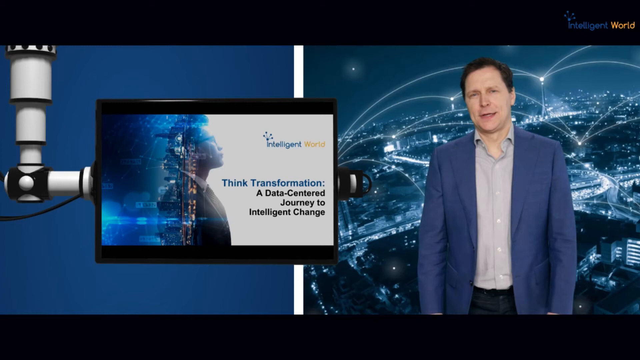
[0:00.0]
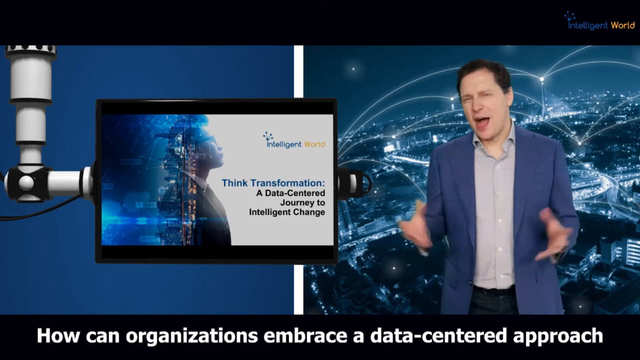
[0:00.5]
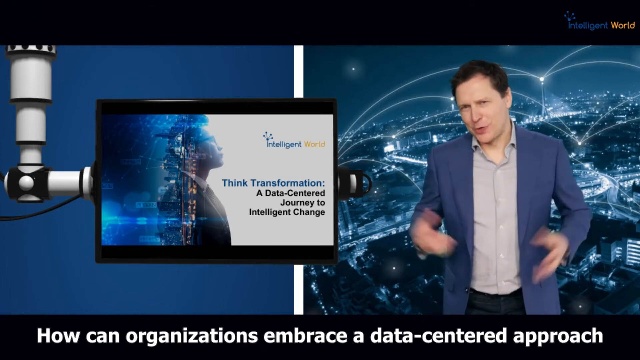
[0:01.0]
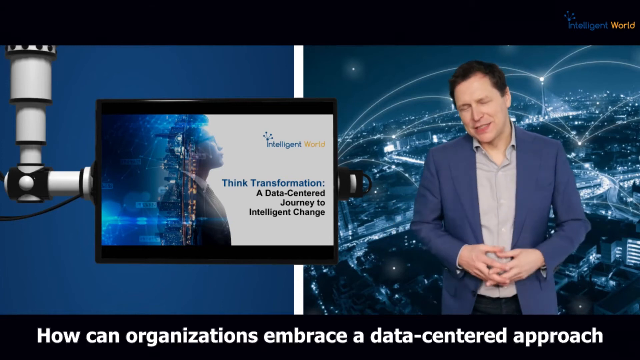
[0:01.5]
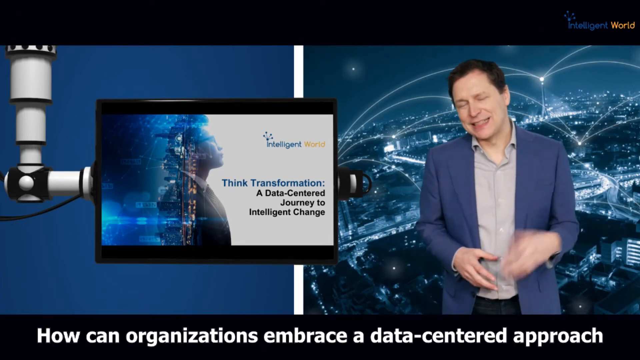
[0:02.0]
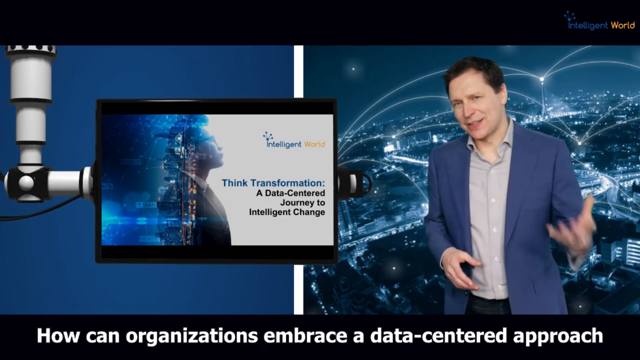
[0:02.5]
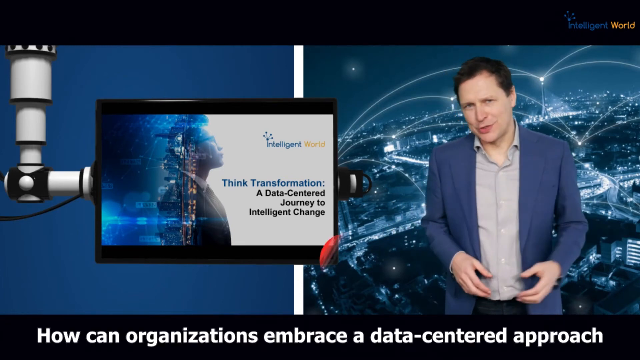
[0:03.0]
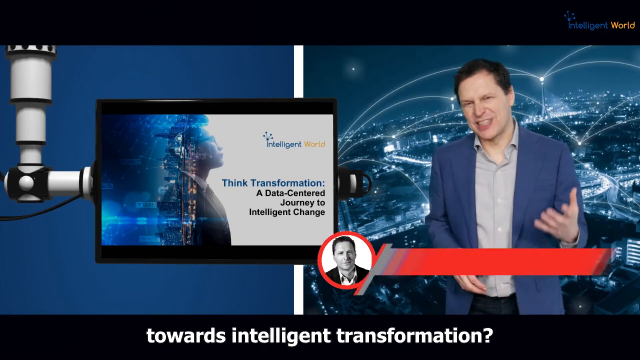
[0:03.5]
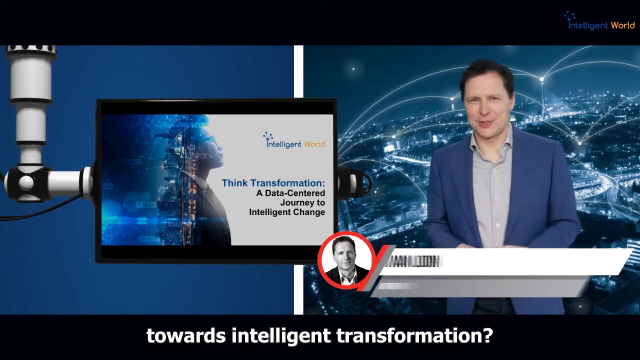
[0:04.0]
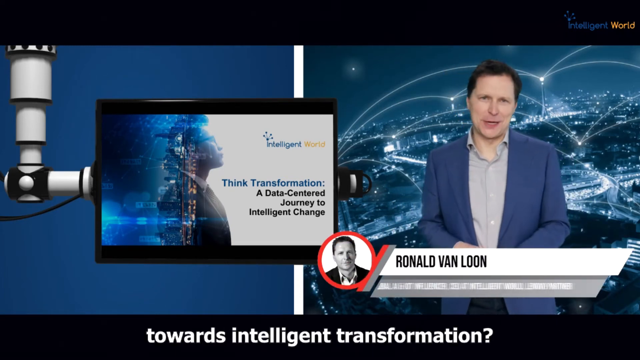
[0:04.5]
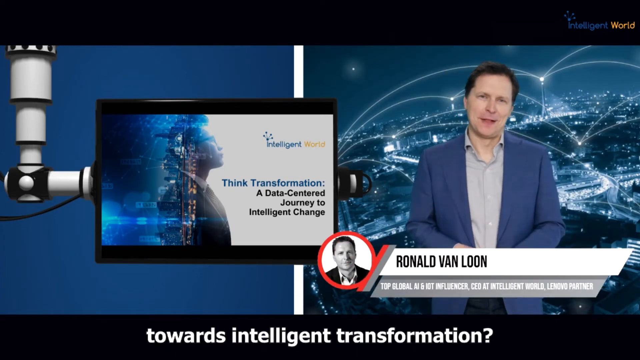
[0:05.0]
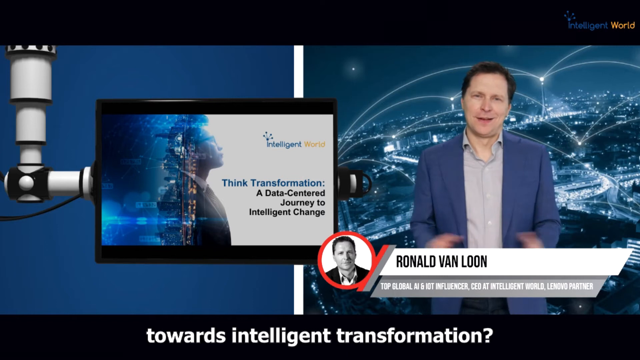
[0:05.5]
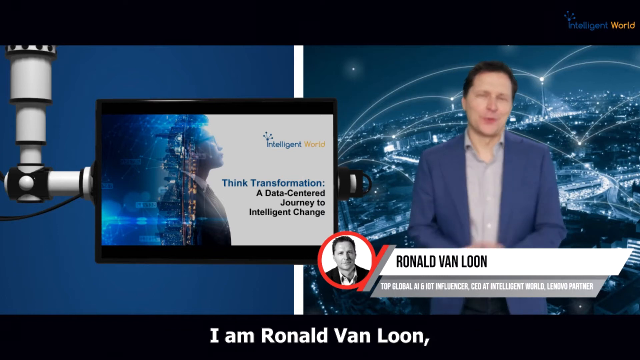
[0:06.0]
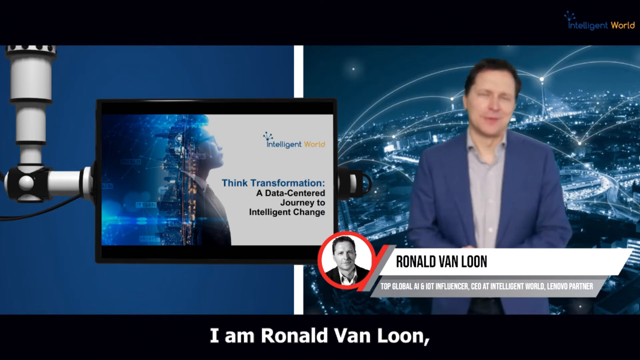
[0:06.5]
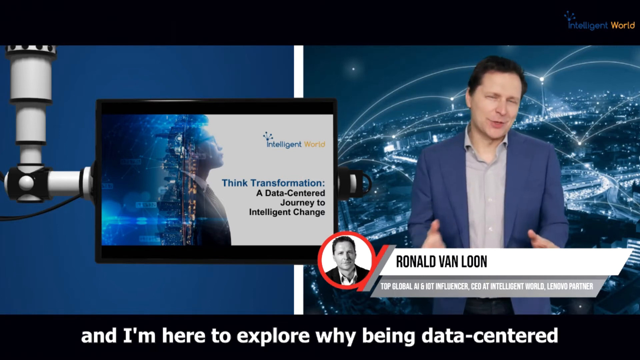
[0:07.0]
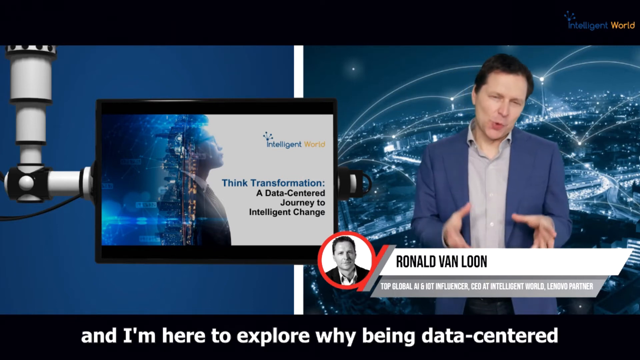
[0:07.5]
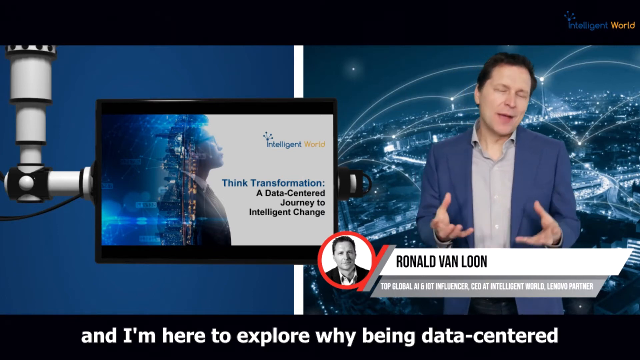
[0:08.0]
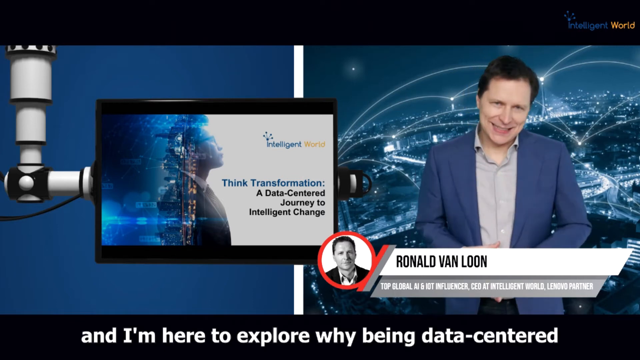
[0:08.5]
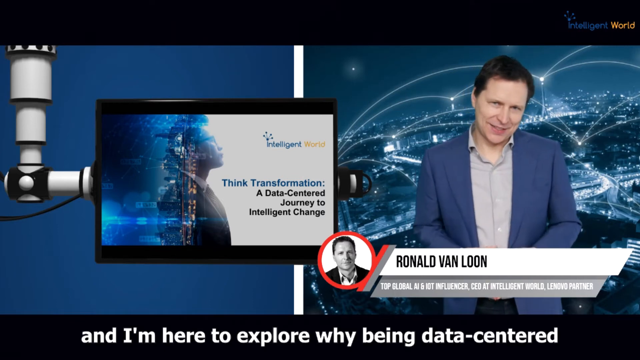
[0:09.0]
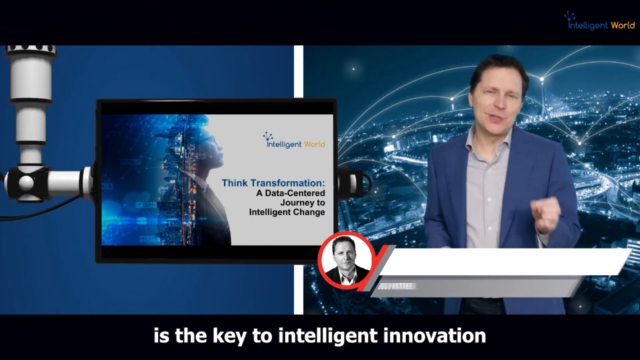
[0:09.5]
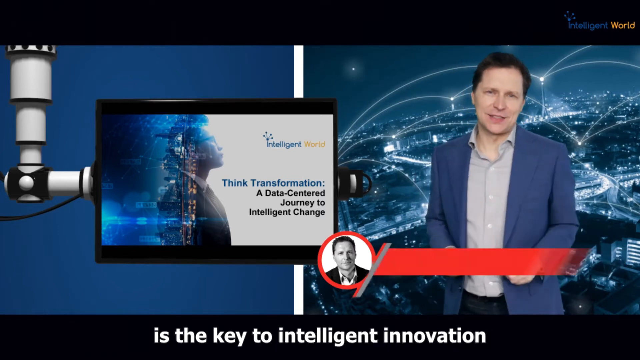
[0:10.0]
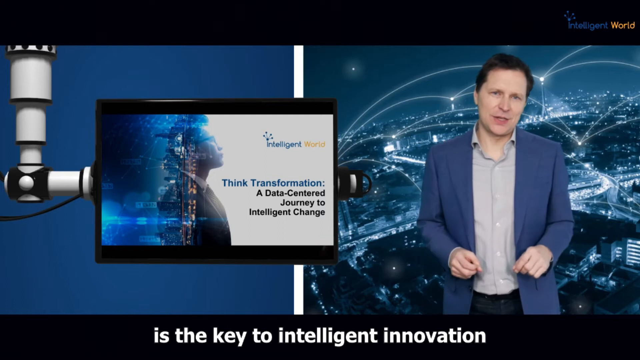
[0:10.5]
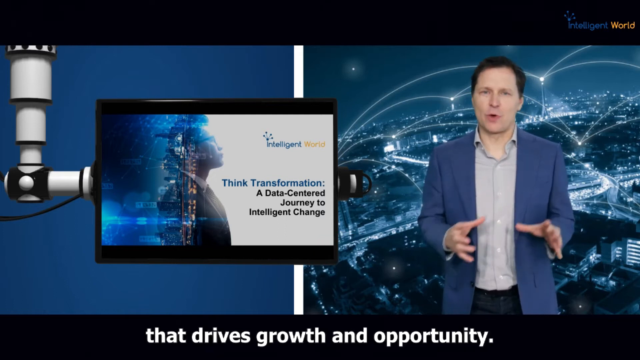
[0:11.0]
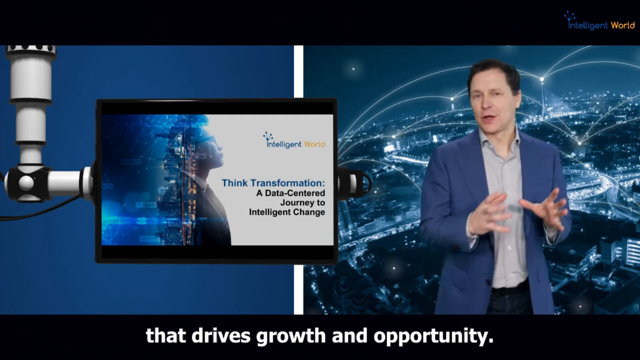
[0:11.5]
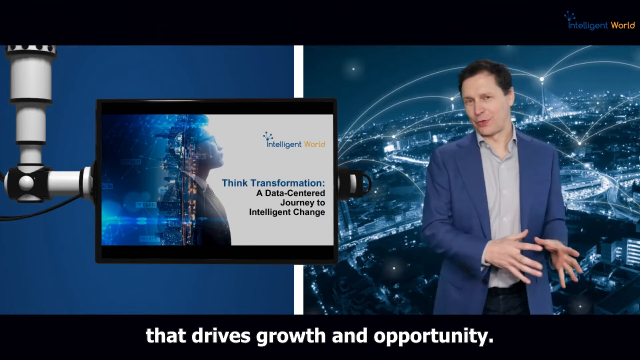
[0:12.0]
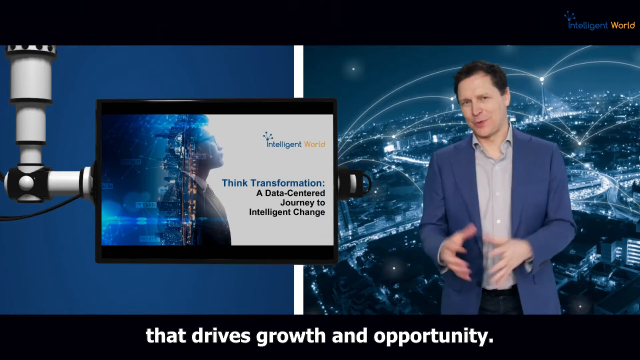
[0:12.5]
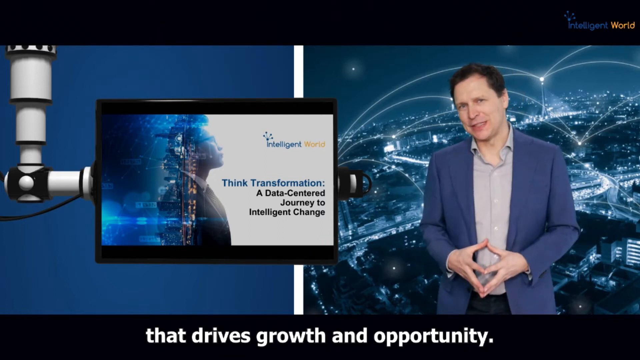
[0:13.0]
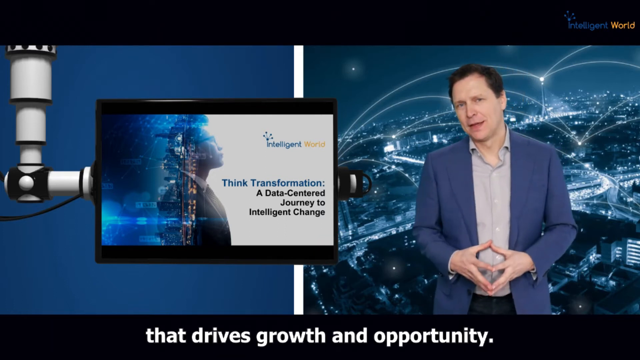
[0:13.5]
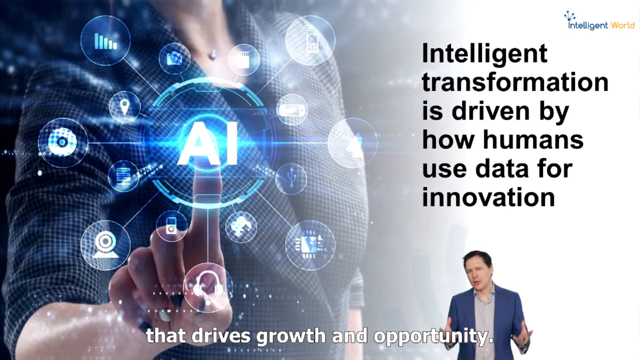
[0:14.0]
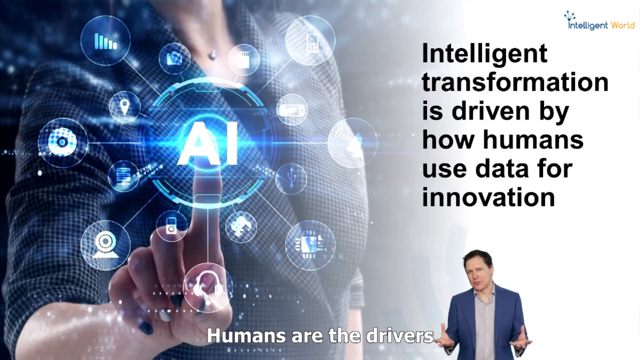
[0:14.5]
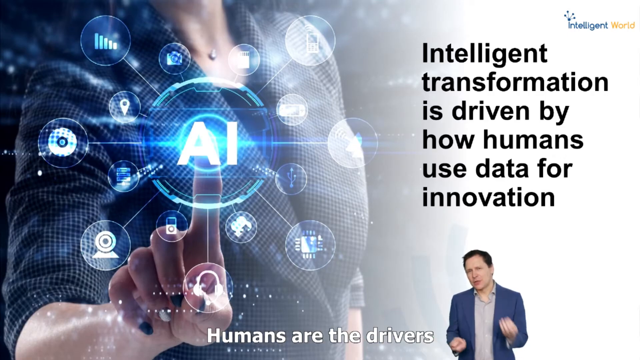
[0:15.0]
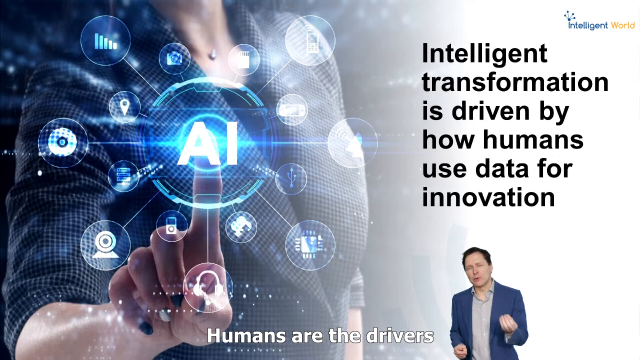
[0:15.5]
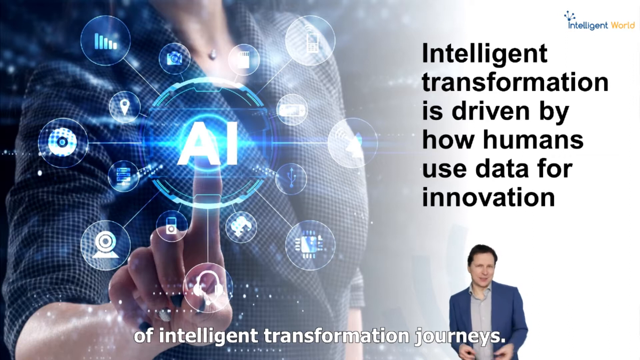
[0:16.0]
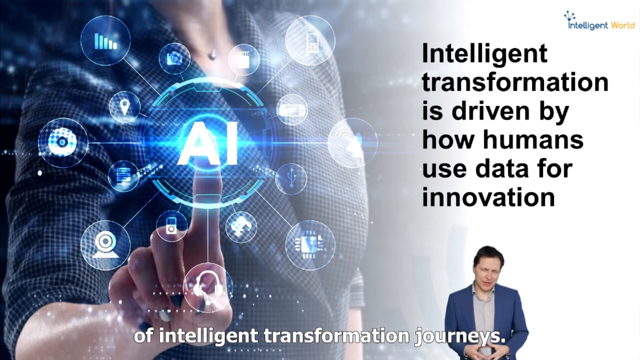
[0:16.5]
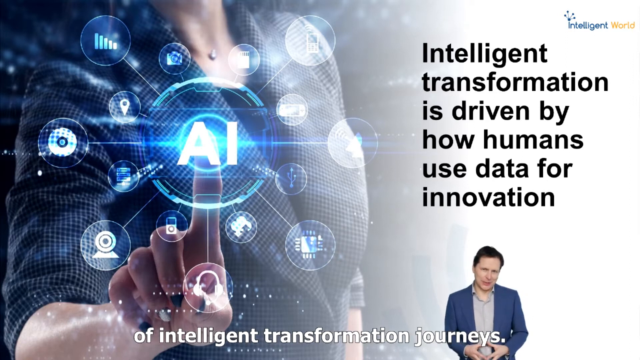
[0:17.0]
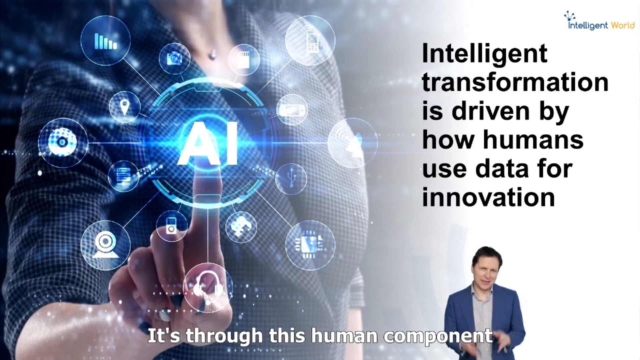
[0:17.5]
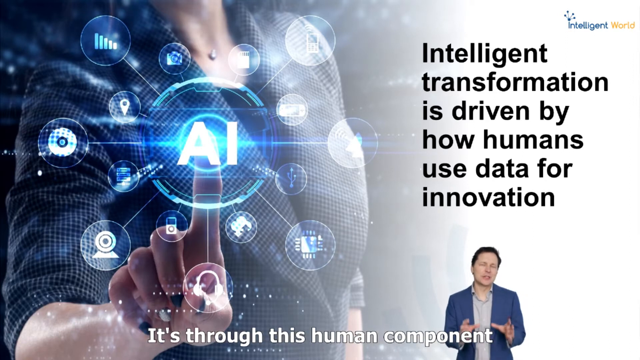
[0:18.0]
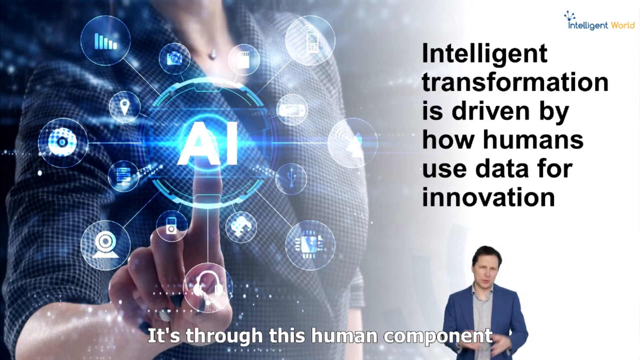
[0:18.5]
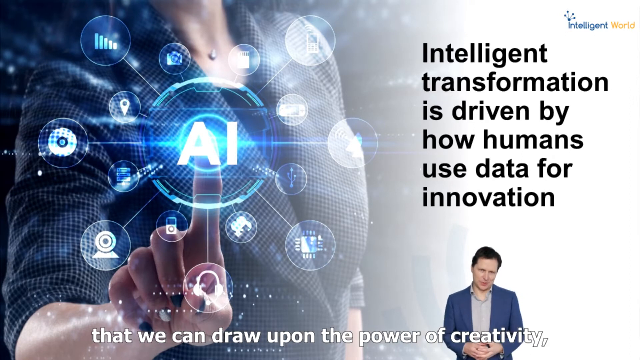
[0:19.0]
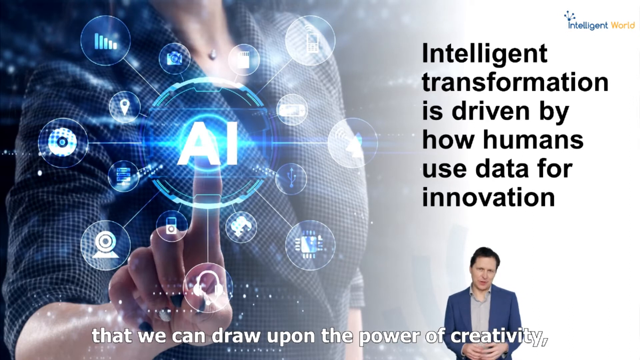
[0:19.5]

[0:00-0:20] A man, who looks to be white and apparently in his mid-40s, wears a suit with no tie and a buttoned-up shirt. The text "Intelligent World" appears. It is on a monitor that hangs, apparently from the ceiling, connected to a white device that kind of looks like an inverted telescope and holds the monitor out to the side. The text "Think transformation, a data-centered journey to intelligent change" appears, along with a computer graphic of a person, with what looks like a city in the background. Text rolls across the screen. The man's face is shown again; he is Ronald Van Loon, and some information appears in what seems to be closed captions. A large, elaborate line of text pops up in the background, taking up the majority of the screen: "Intelligent transformation is driven by how humans use data for innovation."